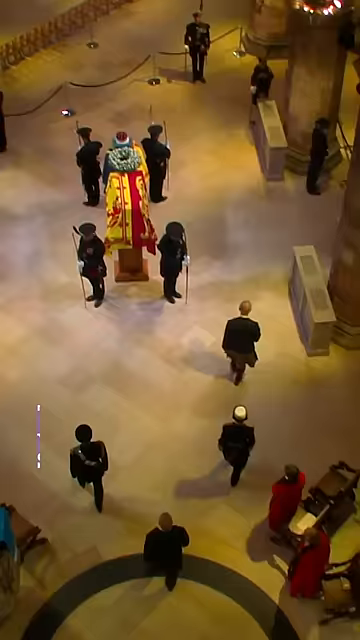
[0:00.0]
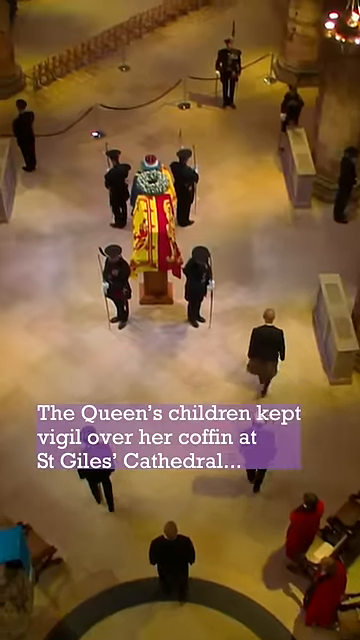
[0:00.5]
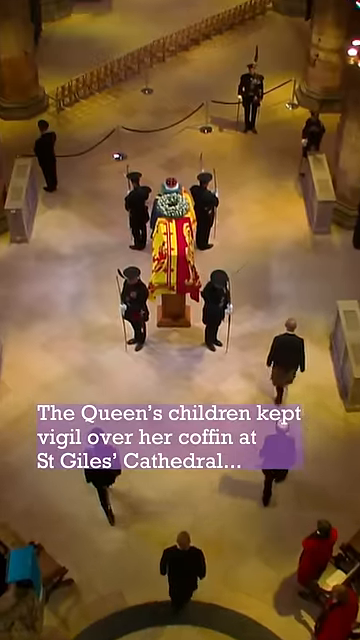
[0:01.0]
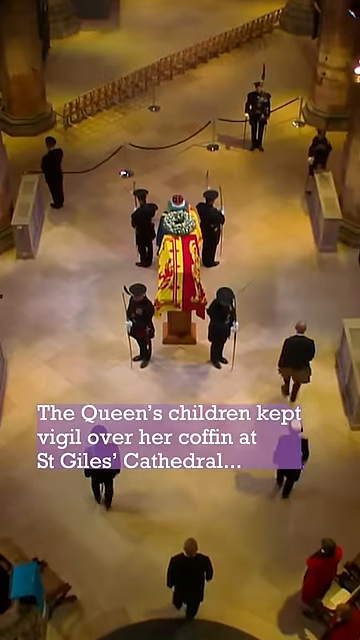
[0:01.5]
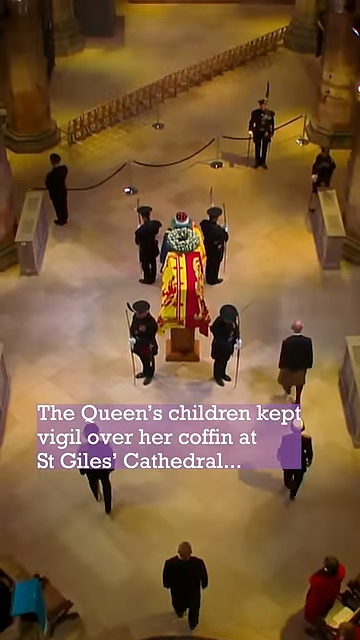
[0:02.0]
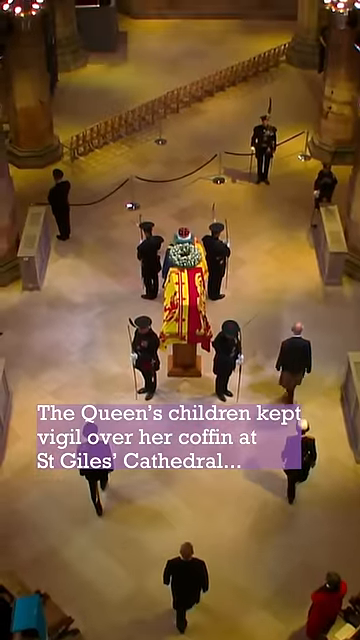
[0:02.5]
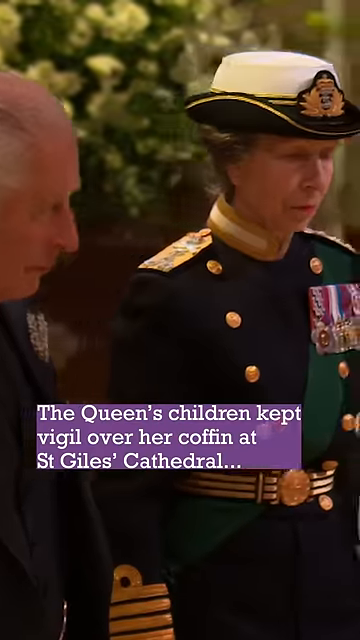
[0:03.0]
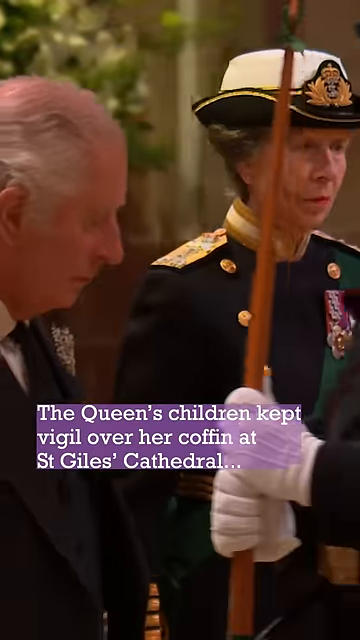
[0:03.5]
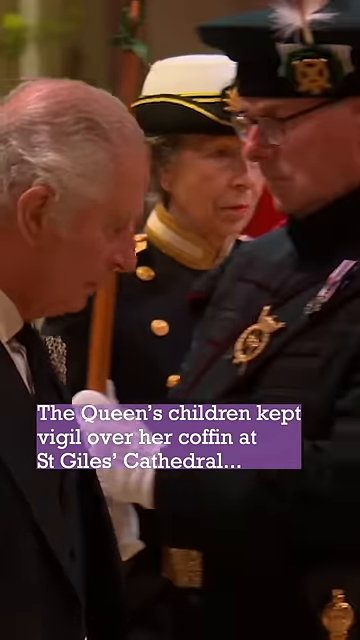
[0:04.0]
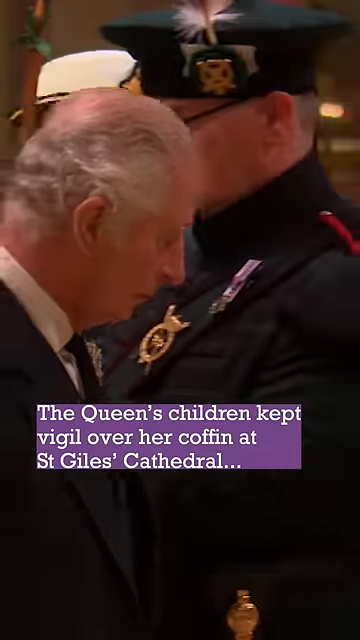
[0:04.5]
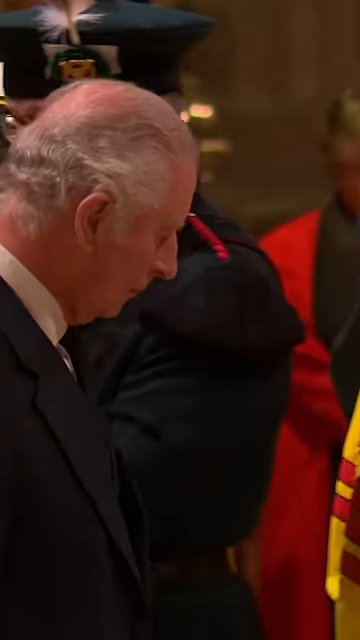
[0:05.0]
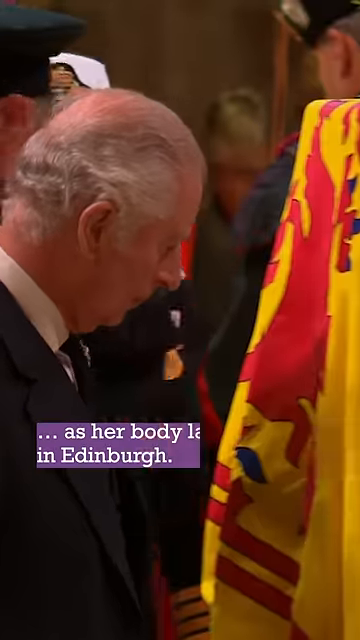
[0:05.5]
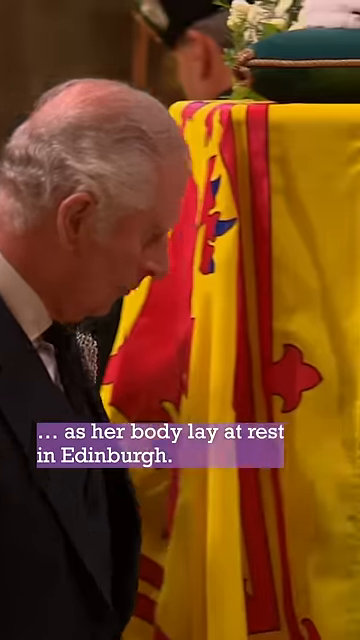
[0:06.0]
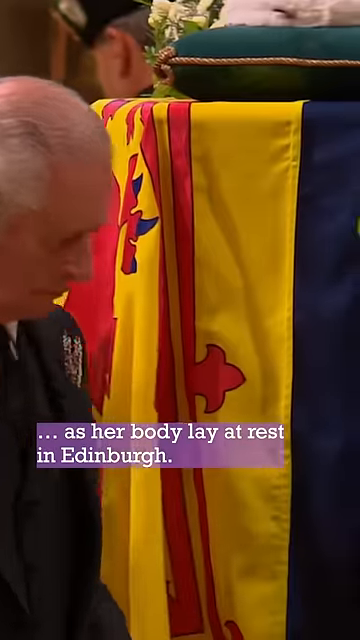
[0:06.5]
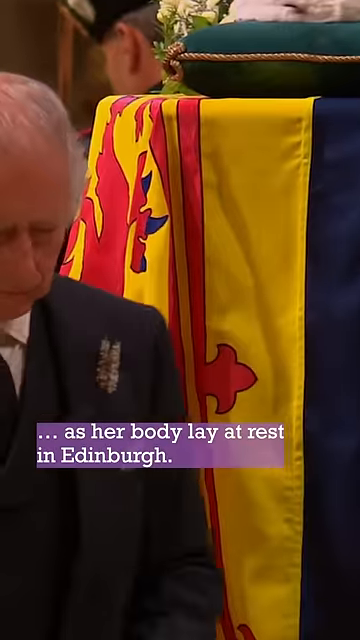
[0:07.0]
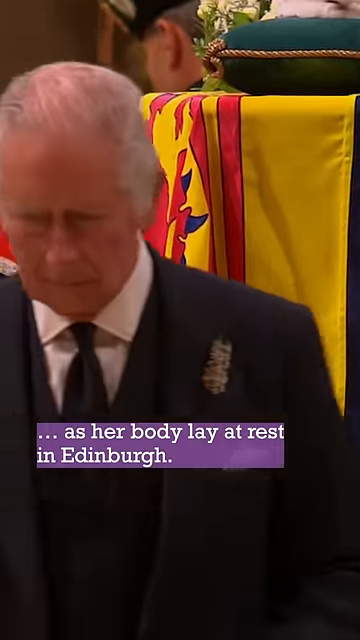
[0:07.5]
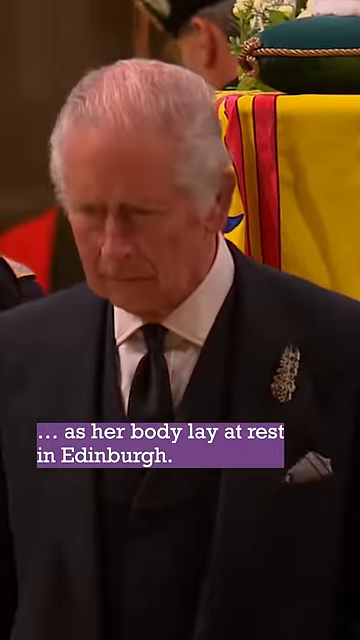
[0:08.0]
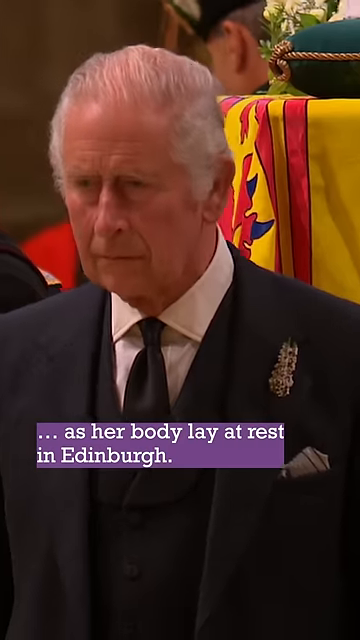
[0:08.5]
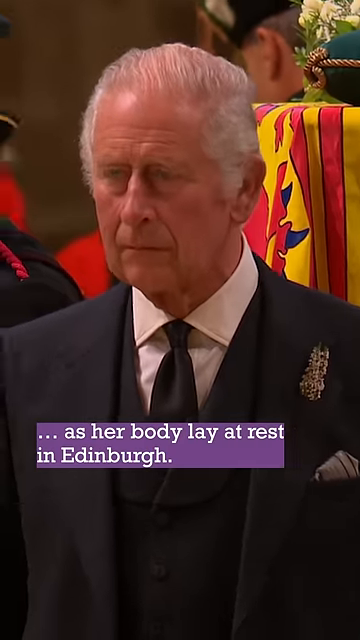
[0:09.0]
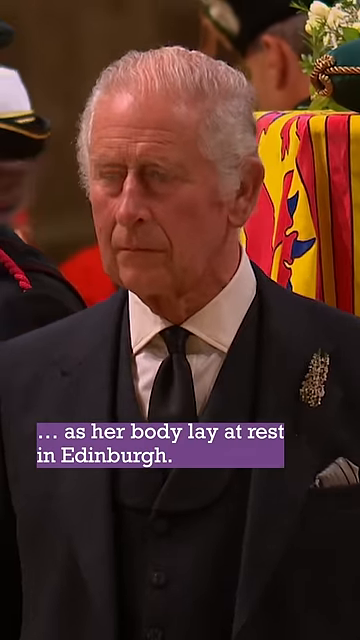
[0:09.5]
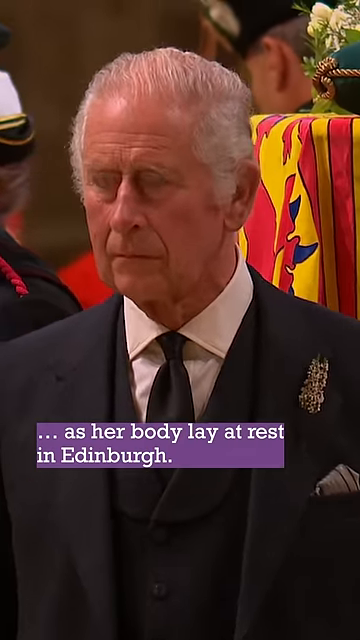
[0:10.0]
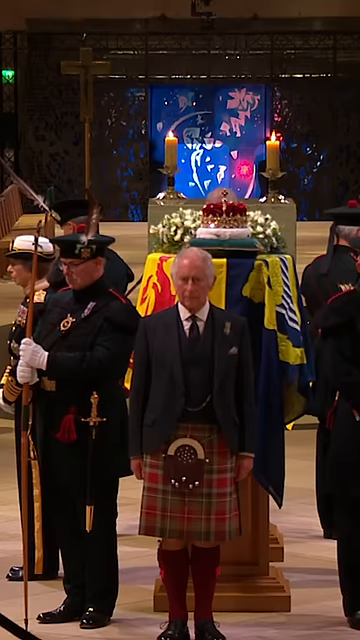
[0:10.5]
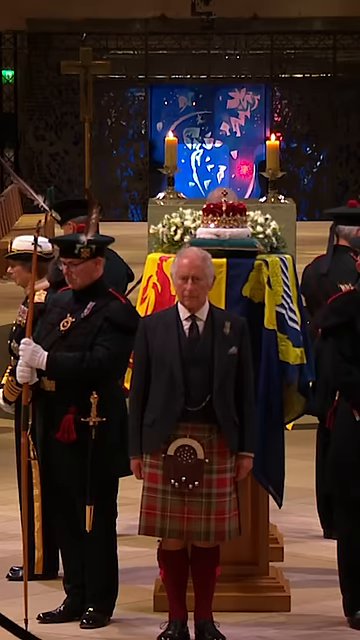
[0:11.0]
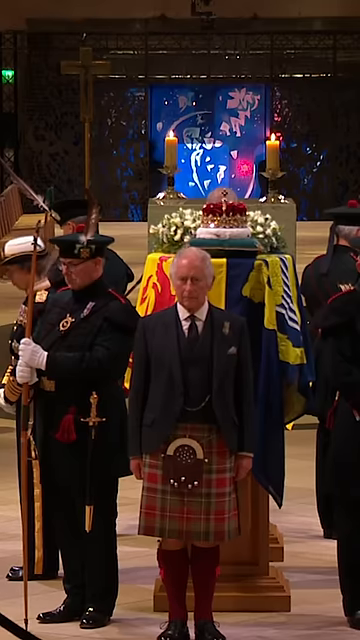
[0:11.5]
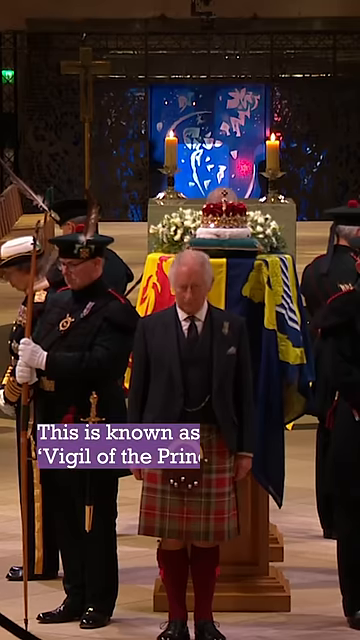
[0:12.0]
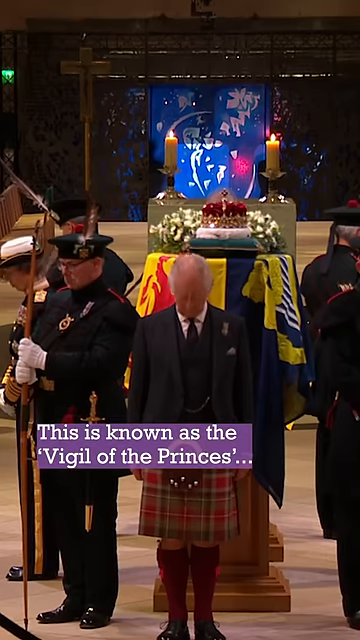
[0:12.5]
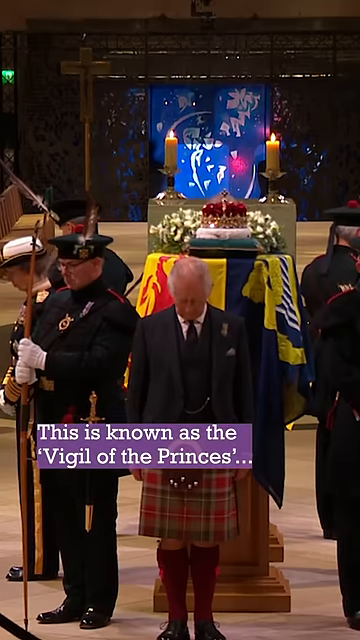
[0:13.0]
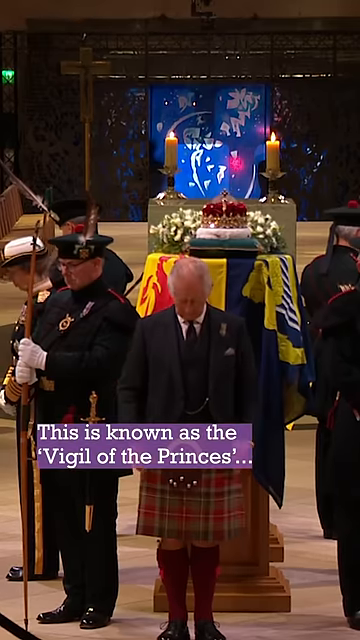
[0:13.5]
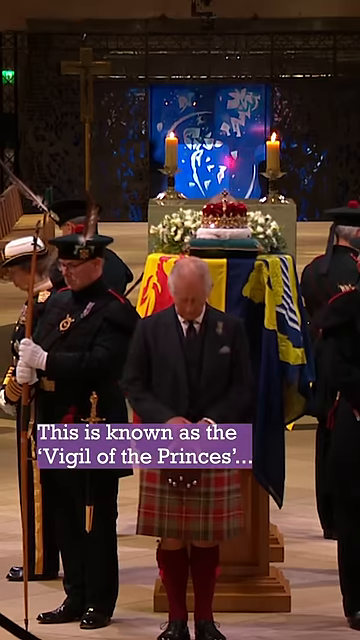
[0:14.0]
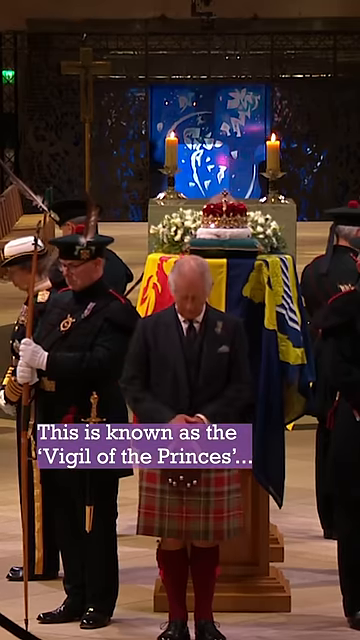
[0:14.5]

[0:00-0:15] Inside a building that appears to be a cathedral, words at the bottom of the screen read "the Queen's children kept vigil over her coffin at St. Giles Cathedral." Armed guards guard a coffin in the middle of the screen while people walk by. Prince Charles, dressed in a black suit, looks at the ground as he walks by, with armed guards behind him. He then turns around to face the coffin, and he and the armed guards are shown standing in silence.